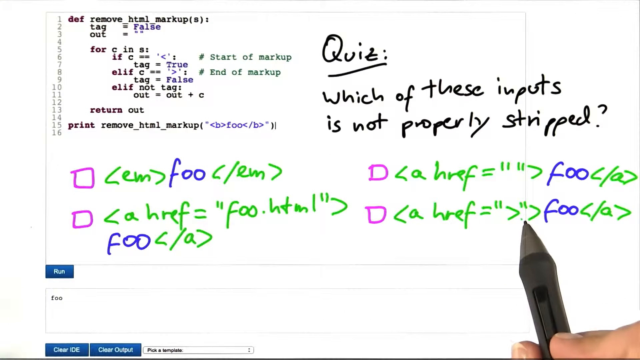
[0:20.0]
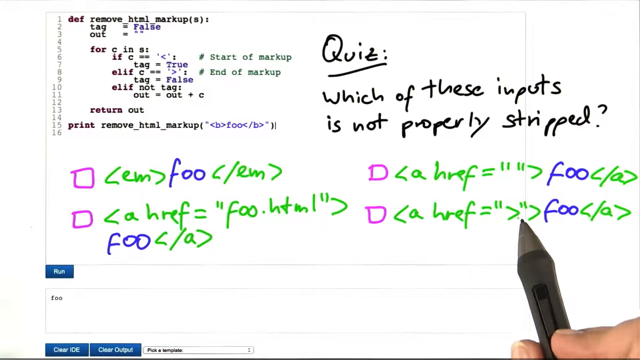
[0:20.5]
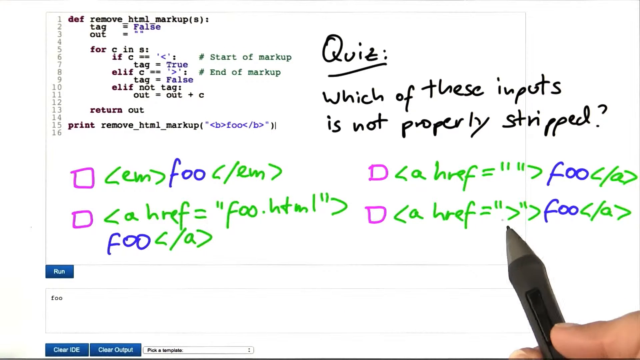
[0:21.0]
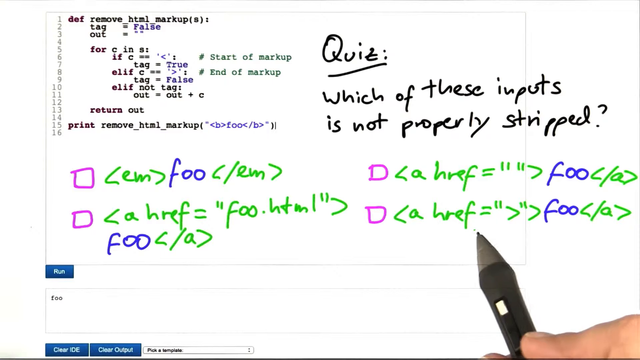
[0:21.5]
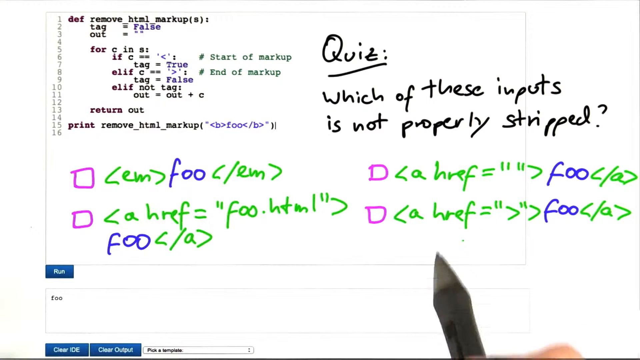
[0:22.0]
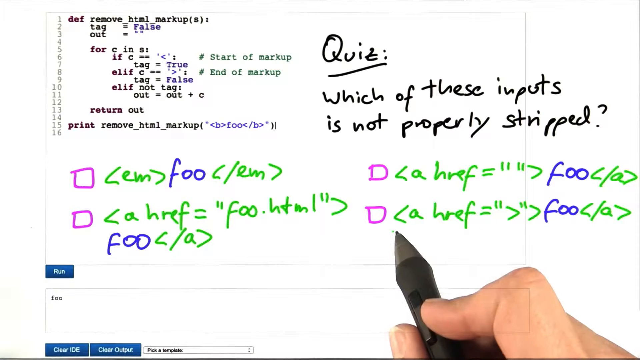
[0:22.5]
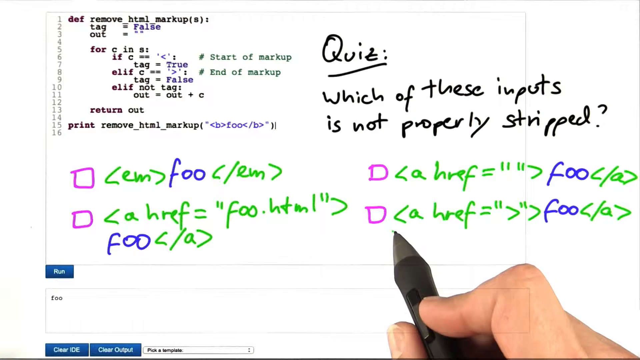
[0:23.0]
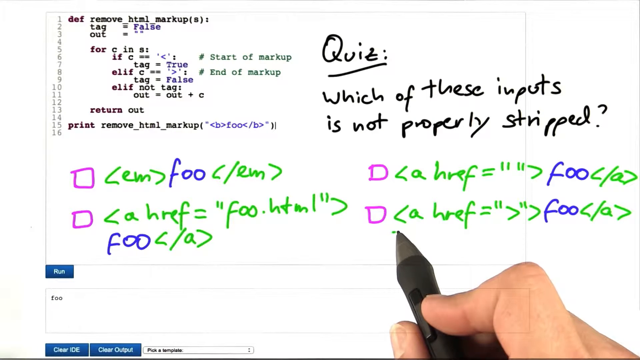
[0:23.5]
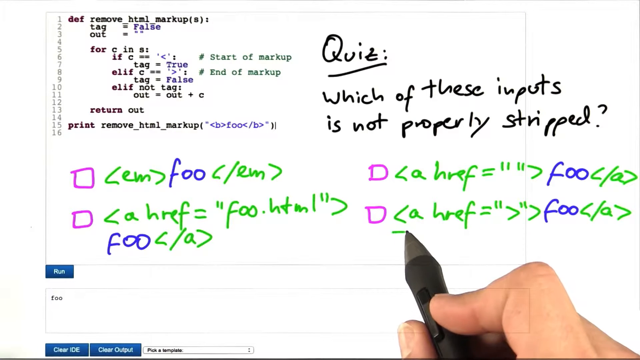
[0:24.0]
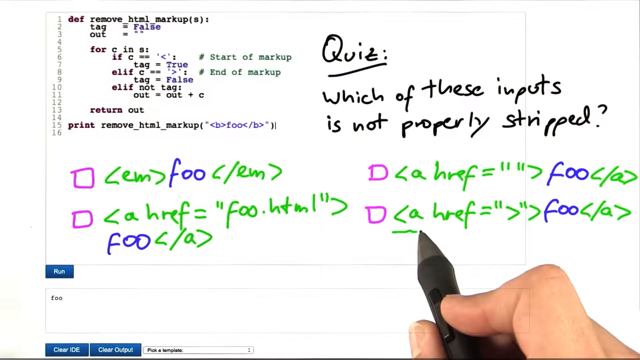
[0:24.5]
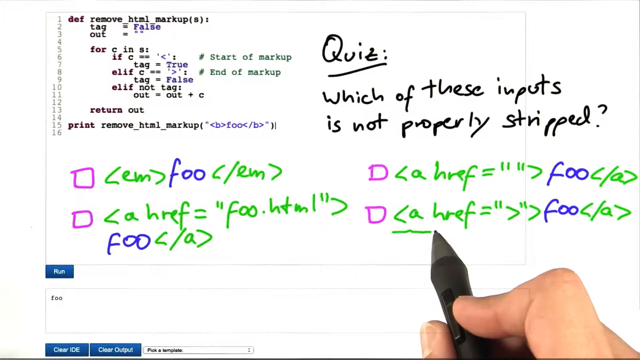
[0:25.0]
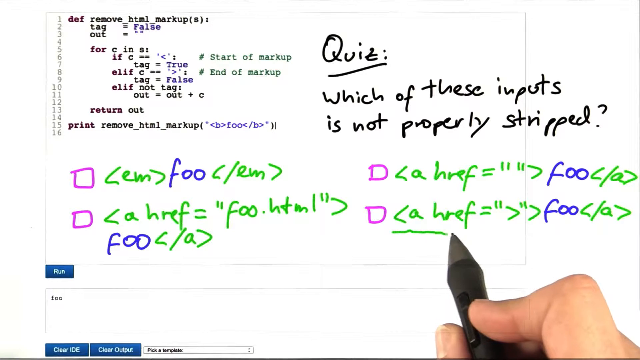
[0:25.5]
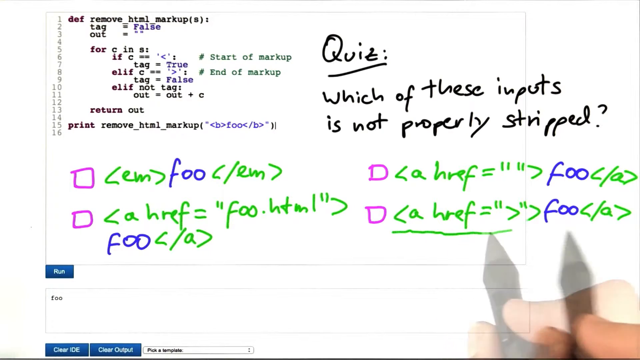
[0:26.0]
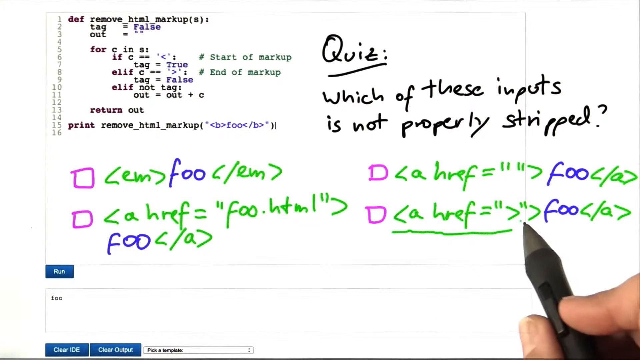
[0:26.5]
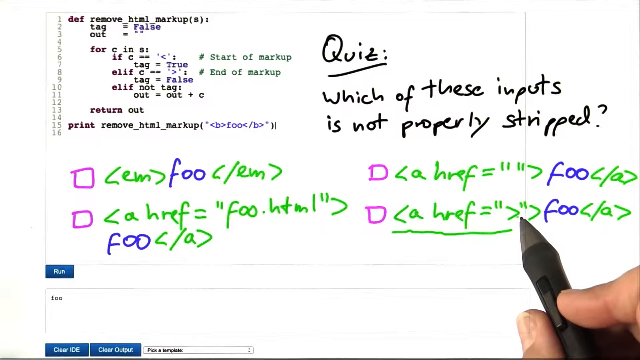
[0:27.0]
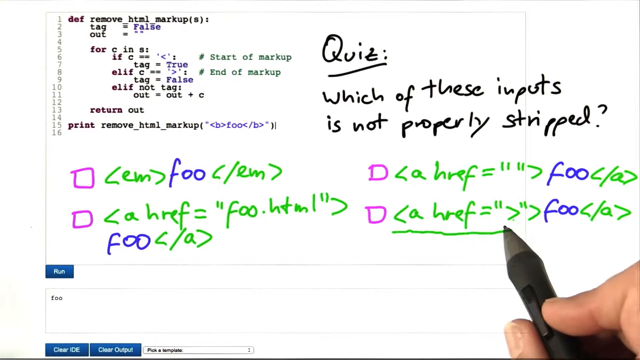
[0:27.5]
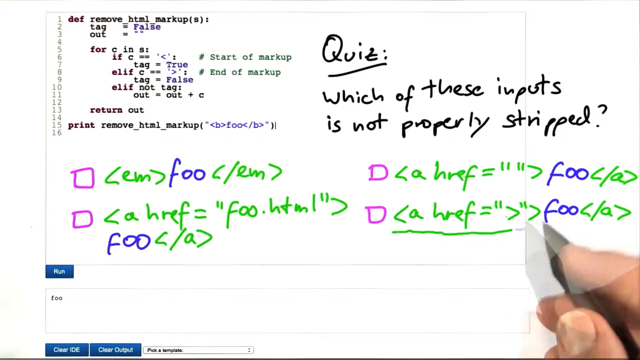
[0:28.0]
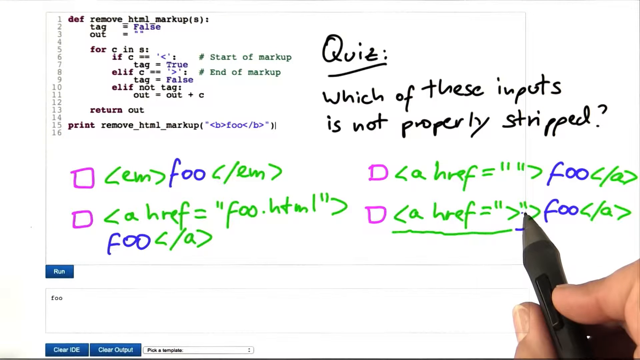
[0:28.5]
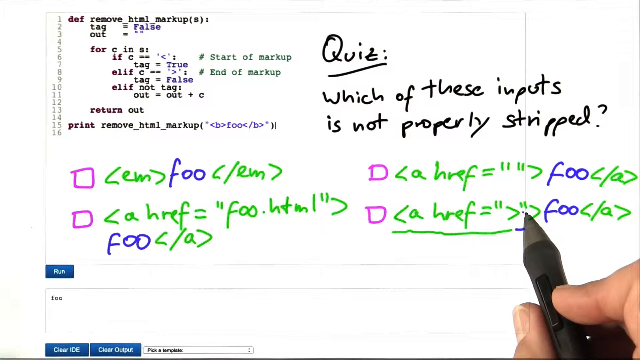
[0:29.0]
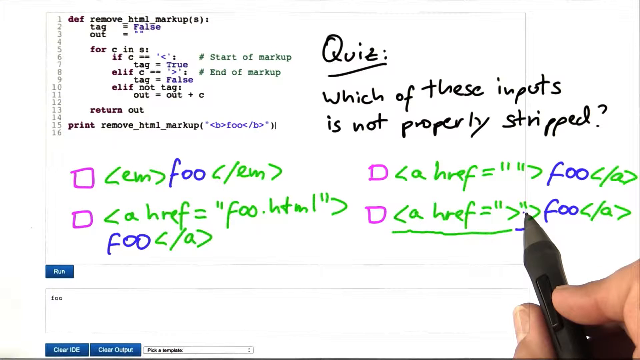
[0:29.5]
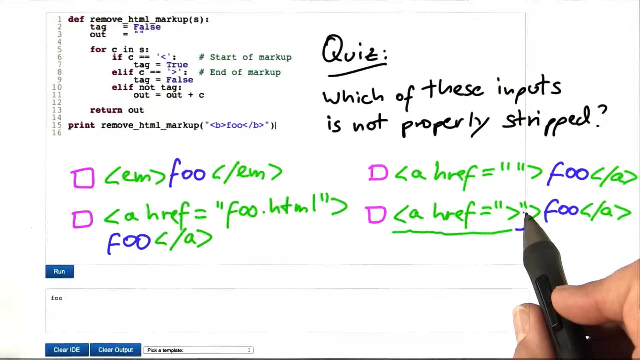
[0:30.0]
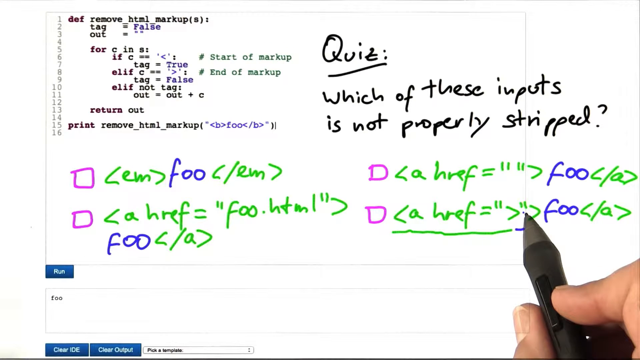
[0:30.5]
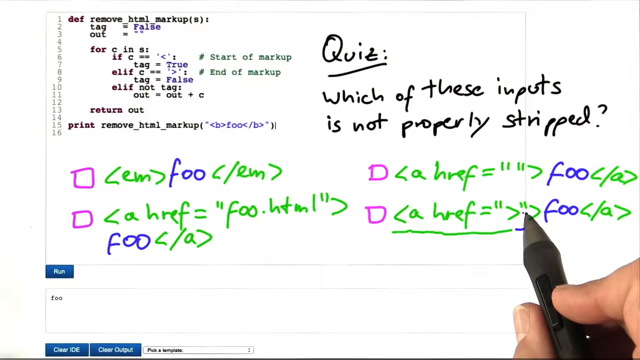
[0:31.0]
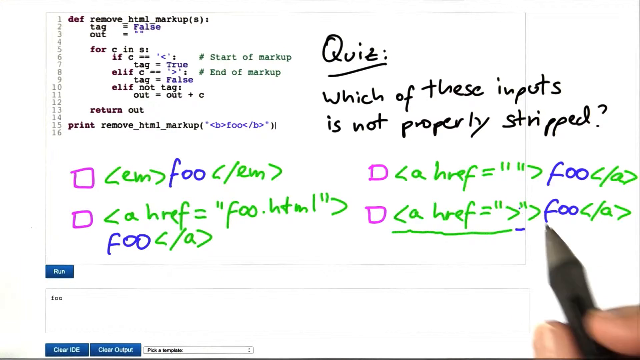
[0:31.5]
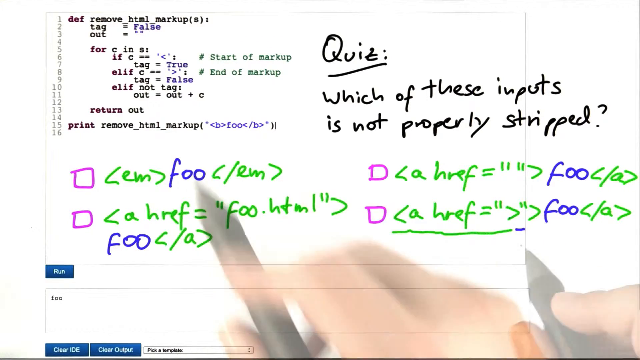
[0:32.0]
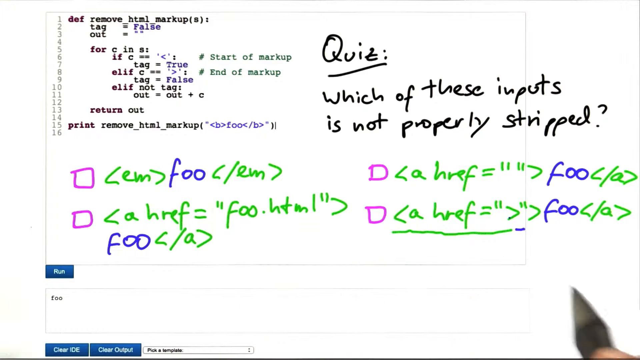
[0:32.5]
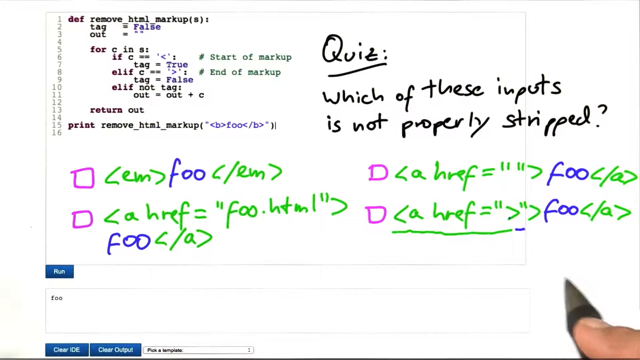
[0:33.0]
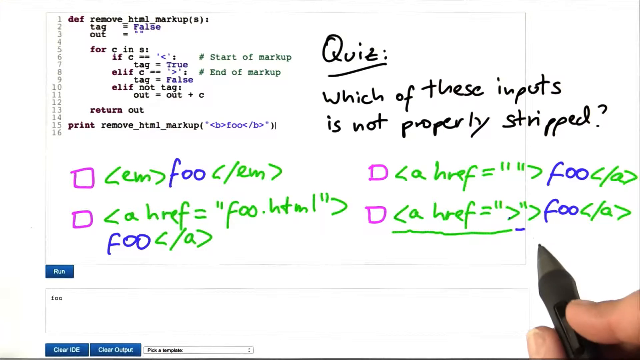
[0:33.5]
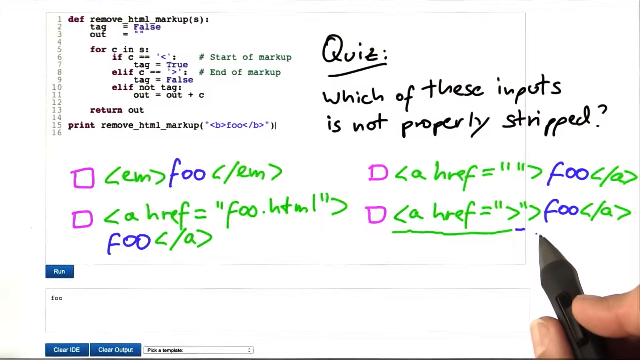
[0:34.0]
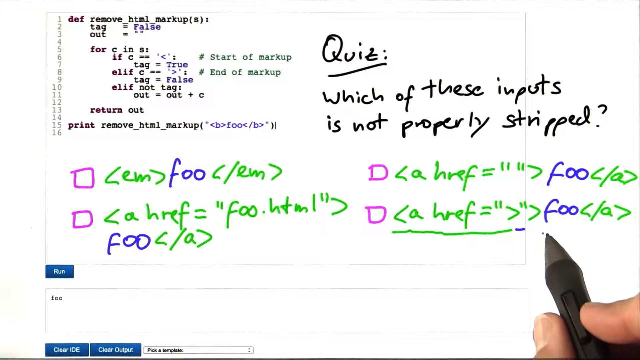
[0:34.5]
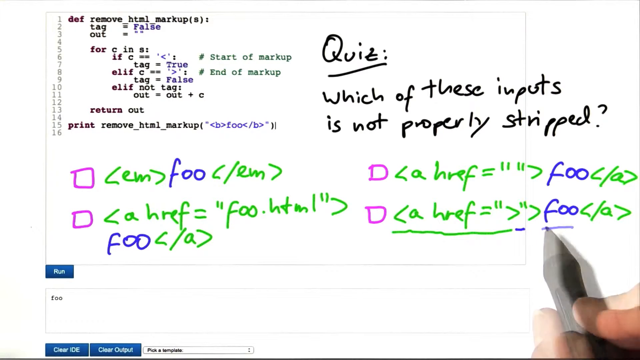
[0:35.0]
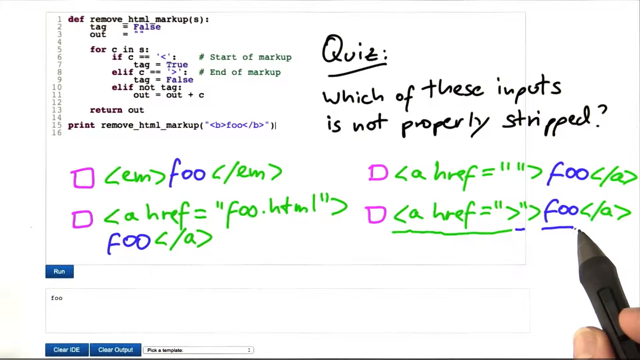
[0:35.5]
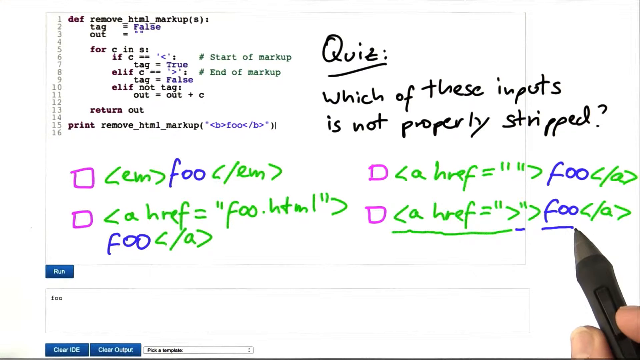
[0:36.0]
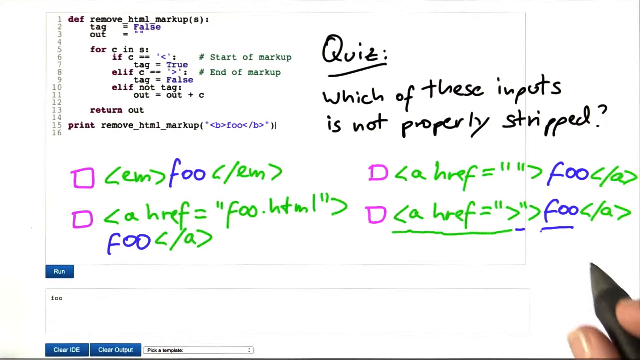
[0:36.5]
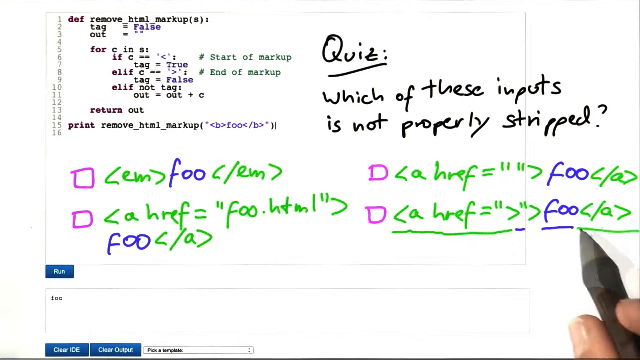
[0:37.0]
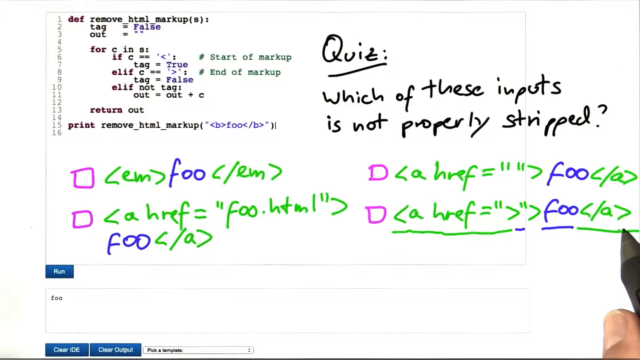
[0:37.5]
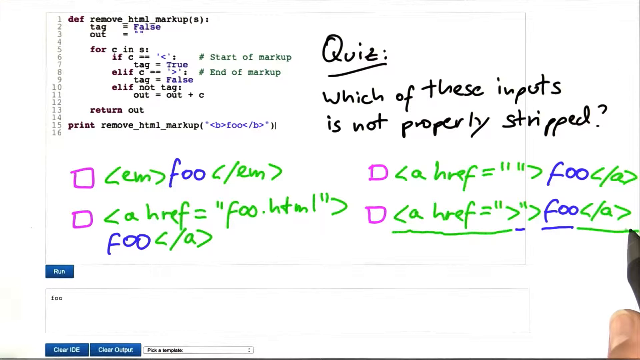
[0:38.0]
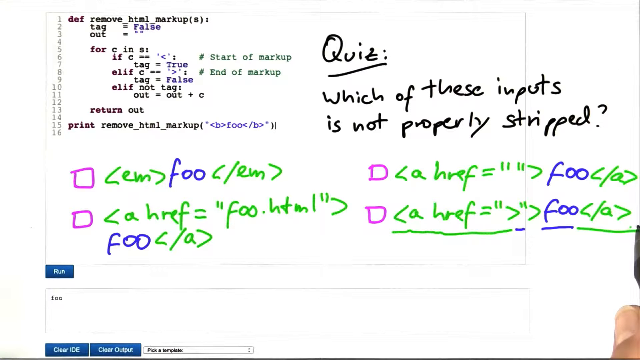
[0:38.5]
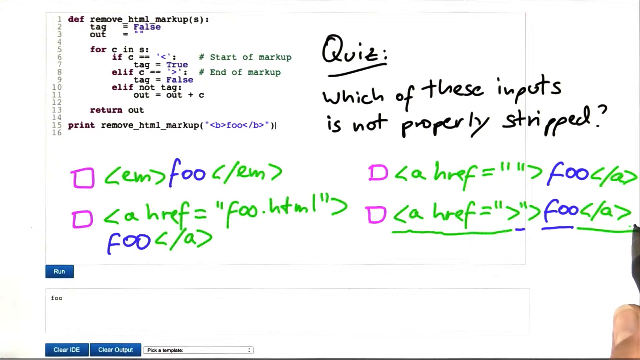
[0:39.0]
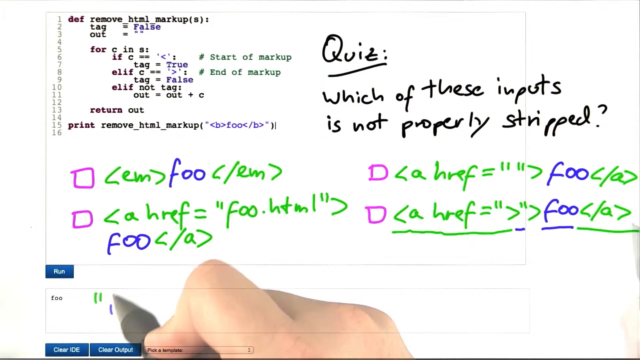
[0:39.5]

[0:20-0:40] The code seems to be HTML. A person marks parts of the code, first one part, then the middle part, then the end, and reads more about the program.